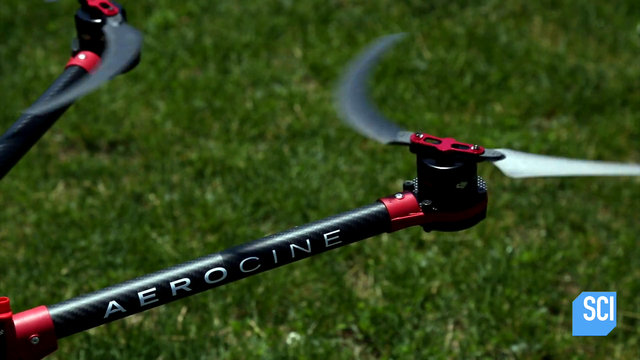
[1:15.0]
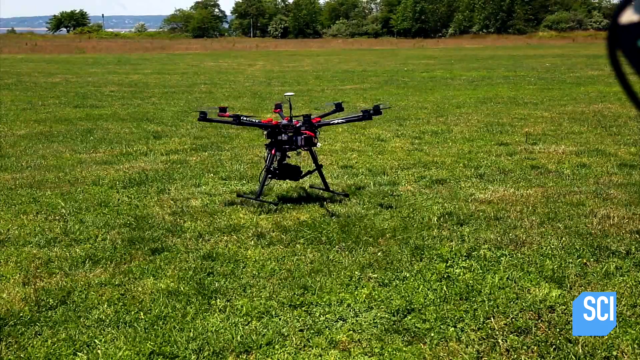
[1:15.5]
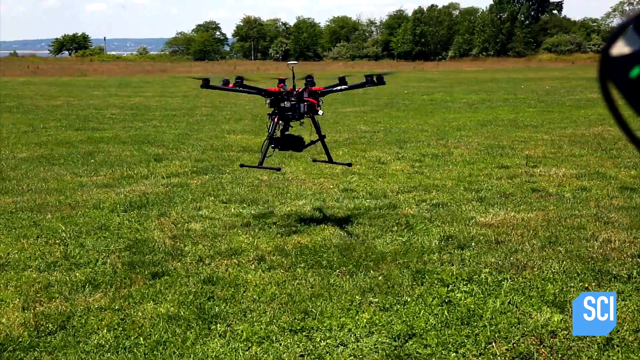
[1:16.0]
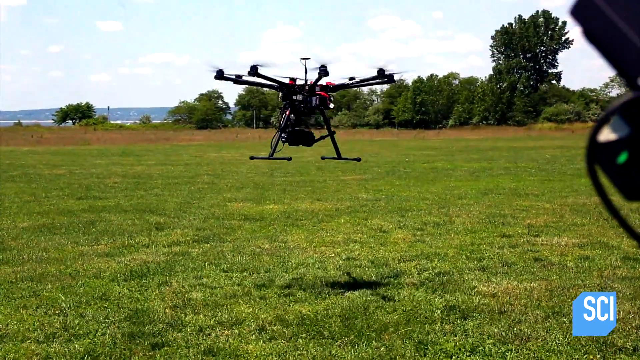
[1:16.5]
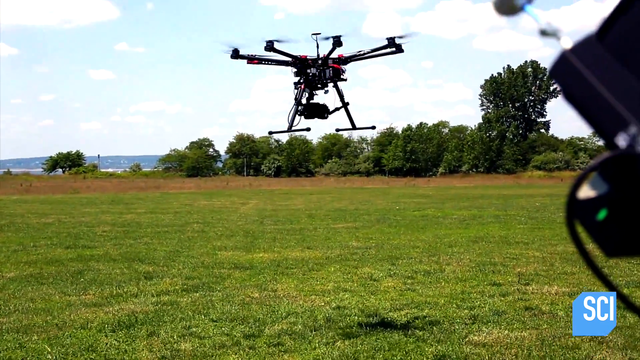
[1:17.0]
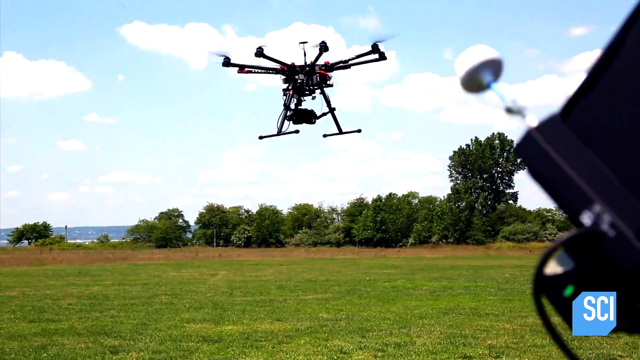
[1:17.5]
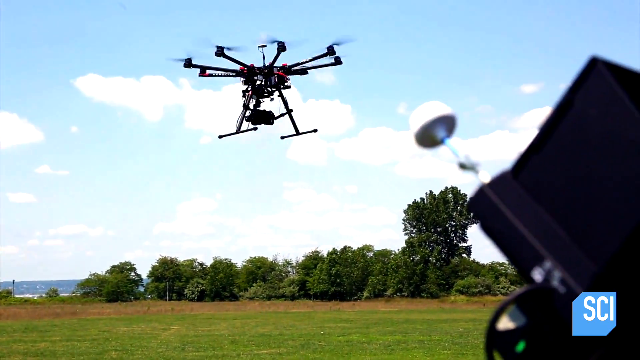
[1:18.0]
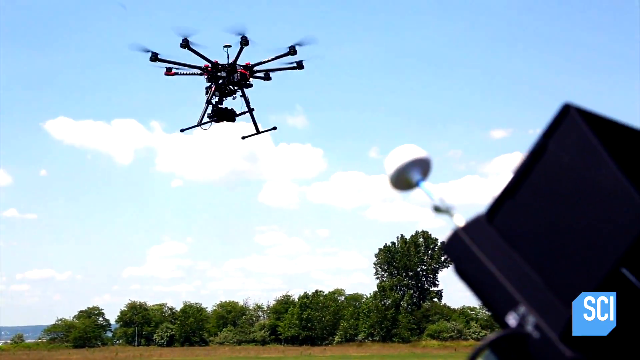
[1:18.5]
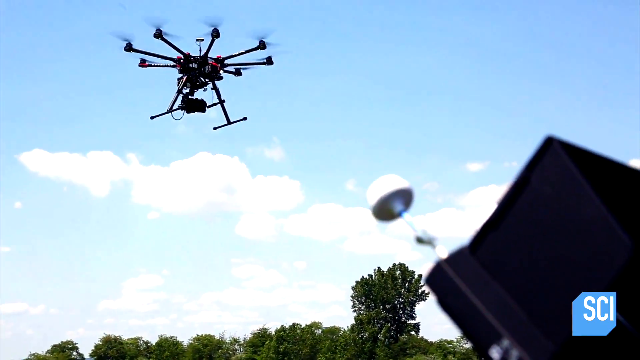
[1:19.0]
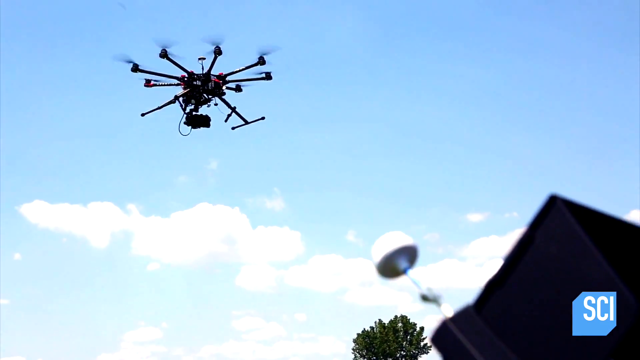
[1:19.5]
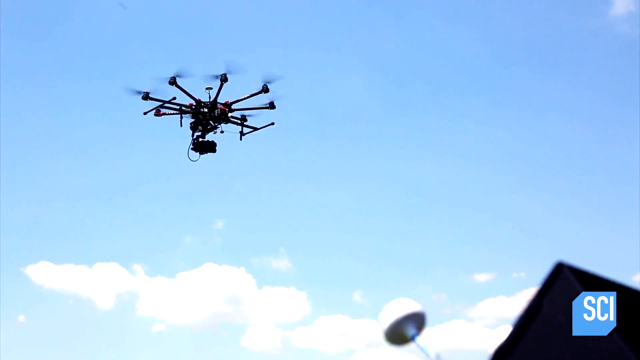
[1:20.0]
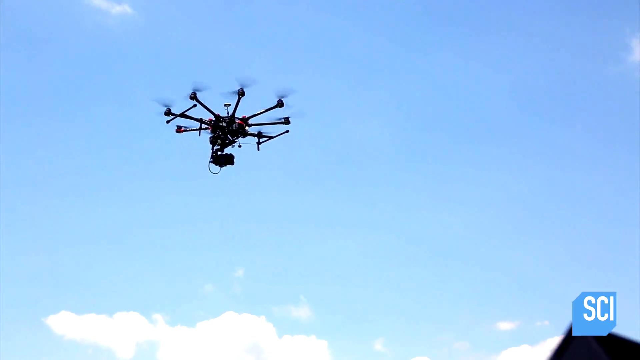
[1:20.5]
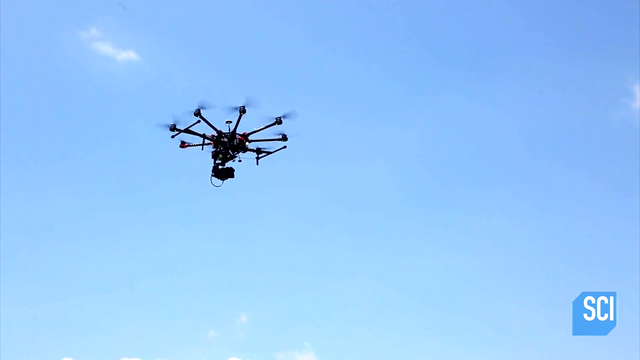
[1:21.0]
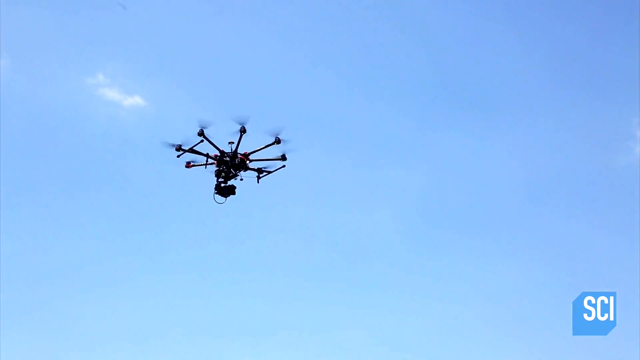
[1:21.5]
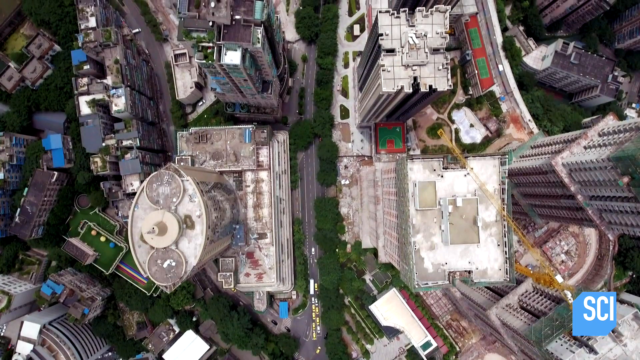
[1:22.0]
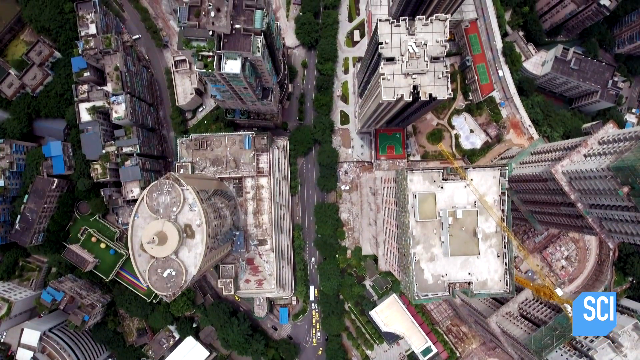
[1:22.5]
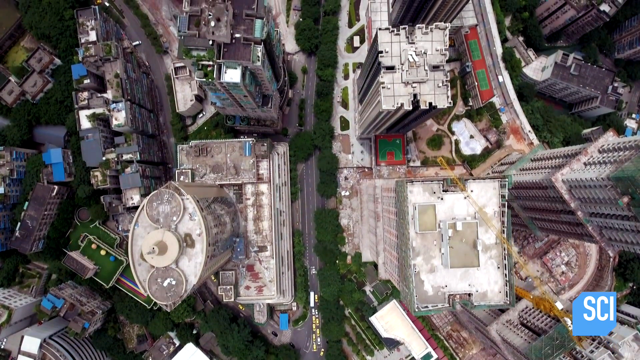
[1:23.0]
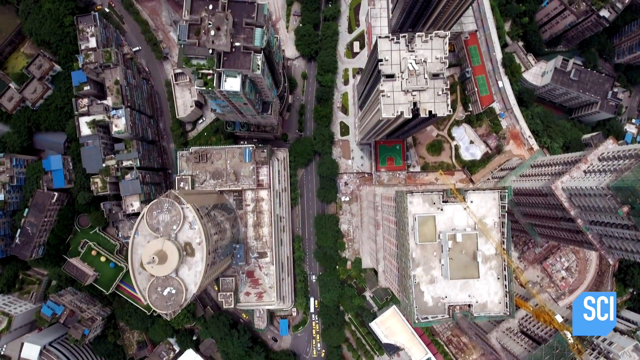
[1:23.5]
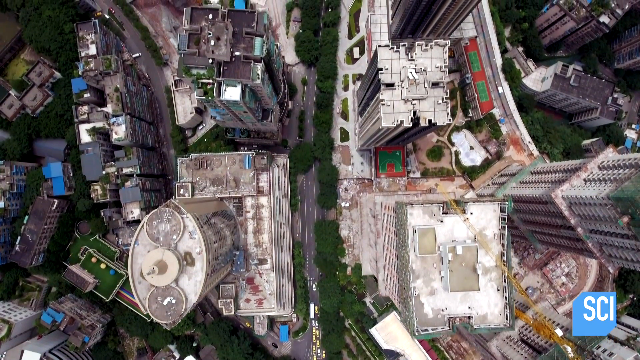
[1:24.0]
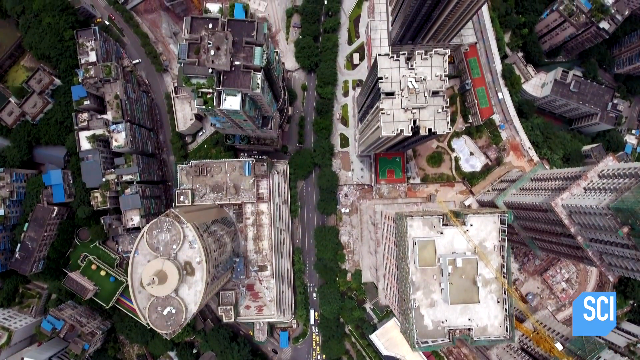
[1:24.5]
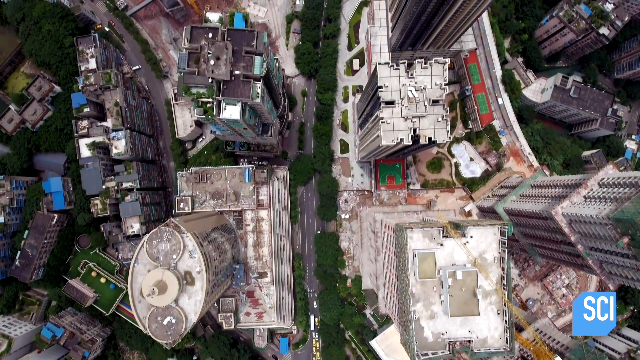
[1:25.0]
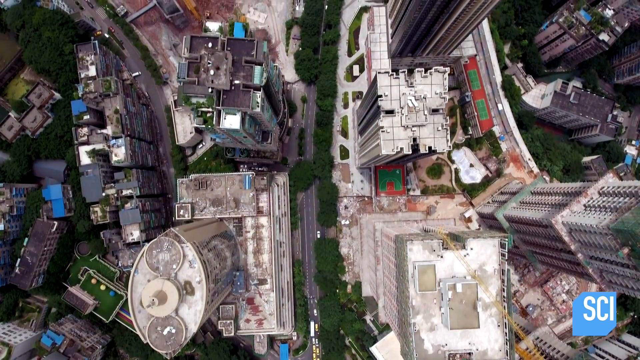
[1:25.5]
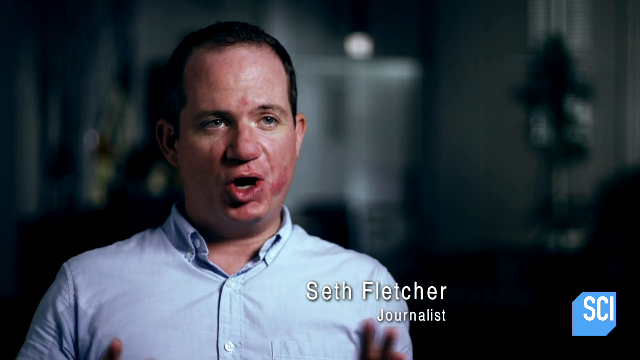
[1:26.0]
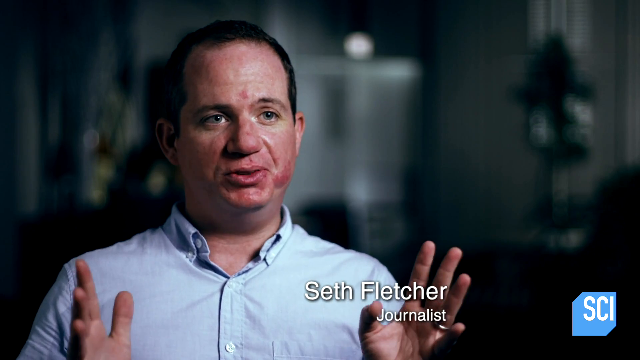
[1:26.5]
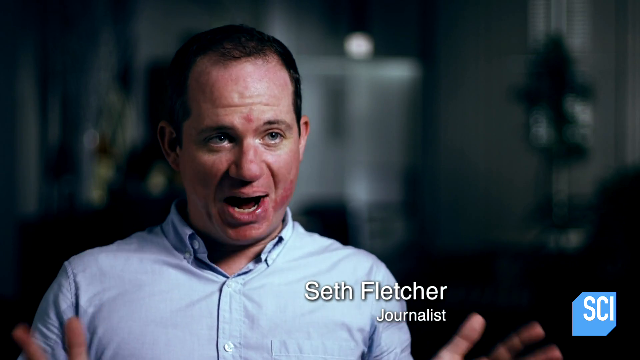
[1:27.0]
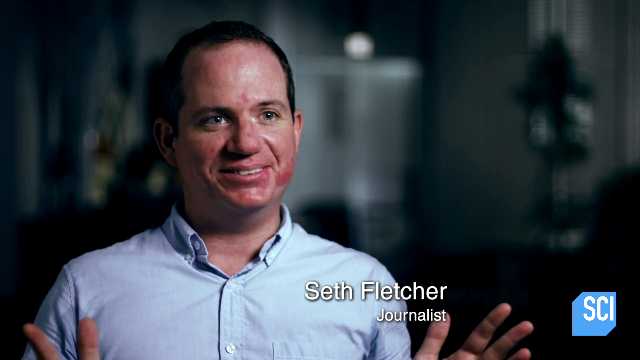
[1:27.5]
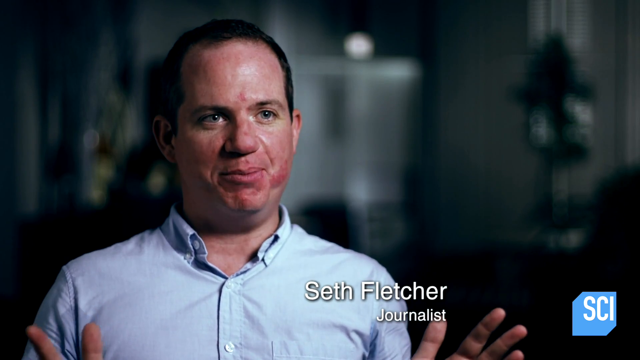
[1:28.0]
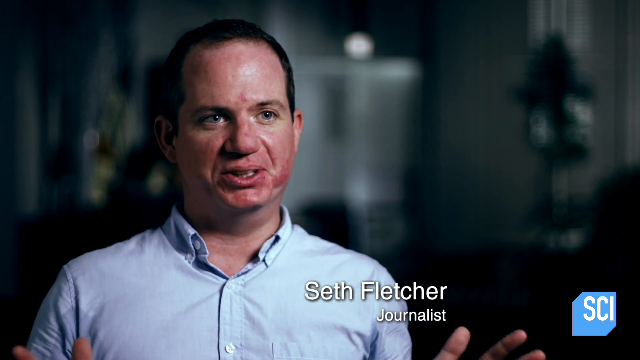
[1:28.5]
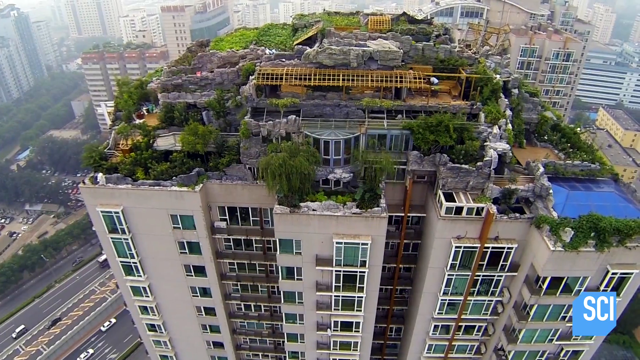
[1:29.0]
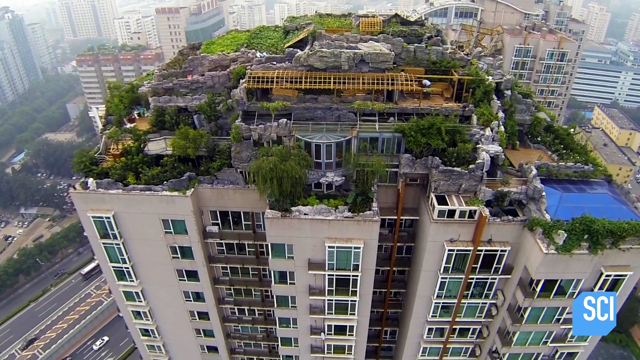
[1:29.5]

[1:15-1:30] The view looks down on a black and red helicopter-type drone that looks like it has at least eight blades. It takes off from a grassy area, with the controller visible in the foreground and the legs lifting up as it rises. Next, the view cruises over Beijing, China, looking down on tall skyscrapers, with parking lots between and below them, city streets, some tennis courts, cars, and a few blue areas that look like maybe swimming pools. A man, Sheen Fletcher, a journalist, is talking. The view then moves to look head on at the building.